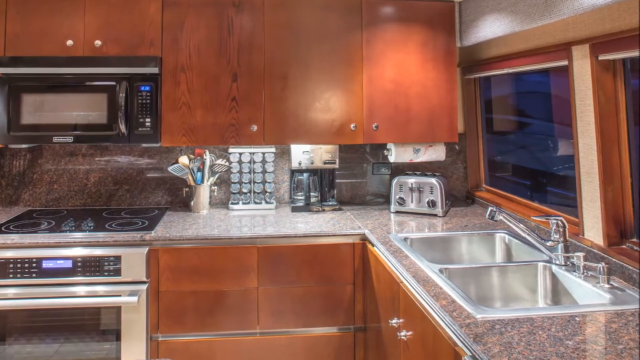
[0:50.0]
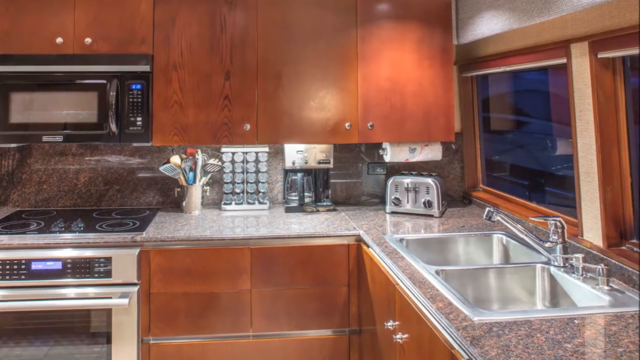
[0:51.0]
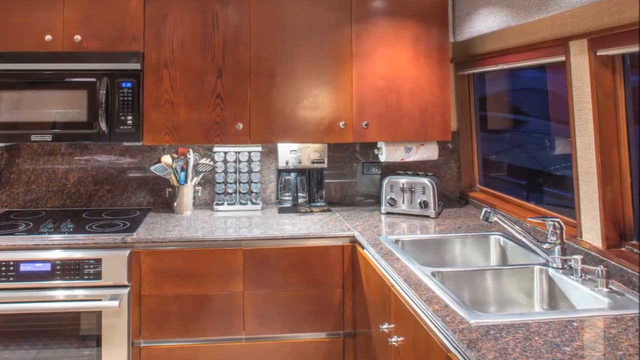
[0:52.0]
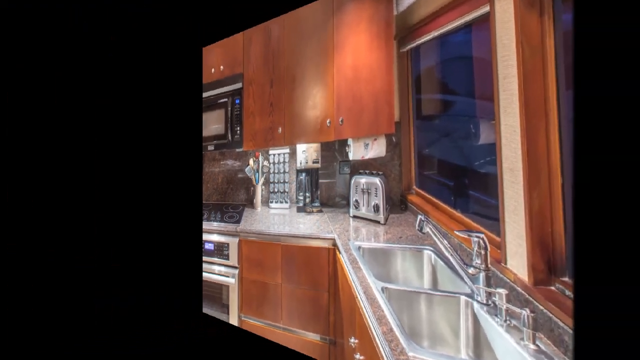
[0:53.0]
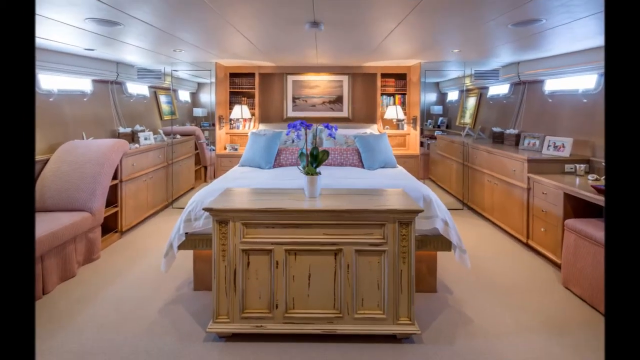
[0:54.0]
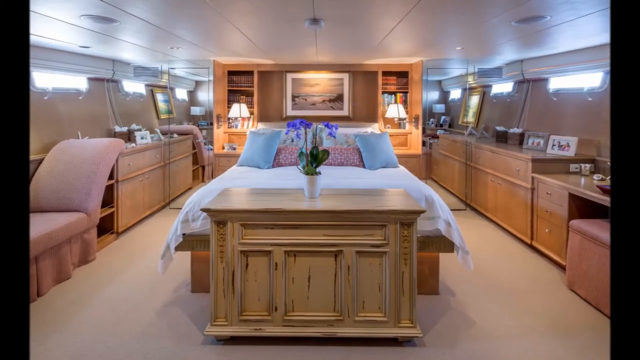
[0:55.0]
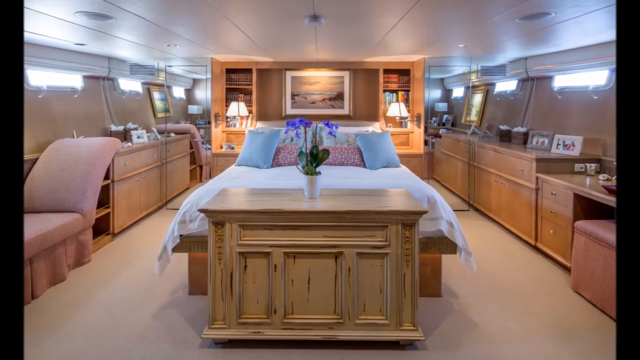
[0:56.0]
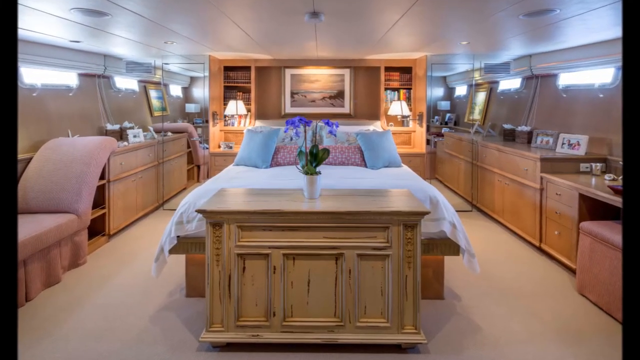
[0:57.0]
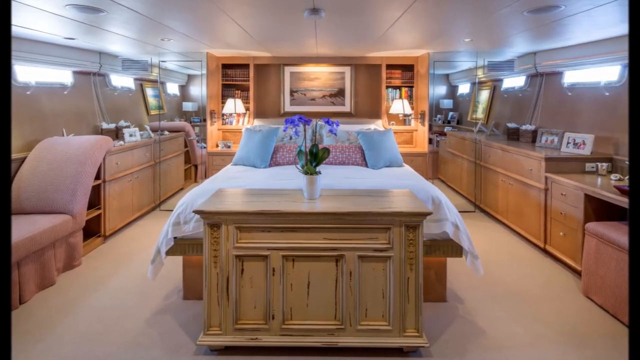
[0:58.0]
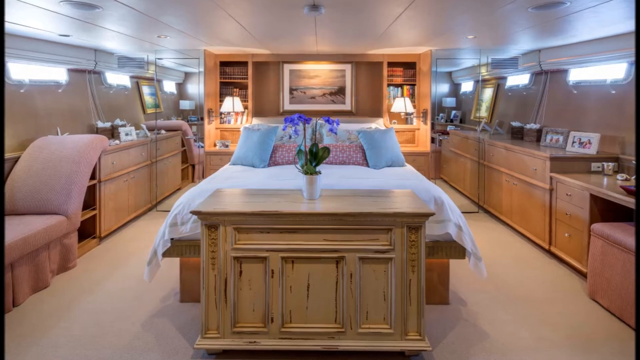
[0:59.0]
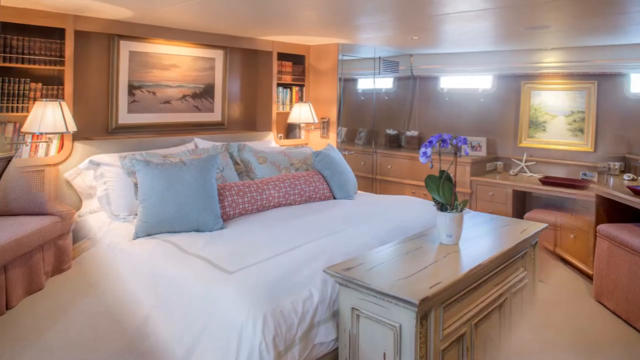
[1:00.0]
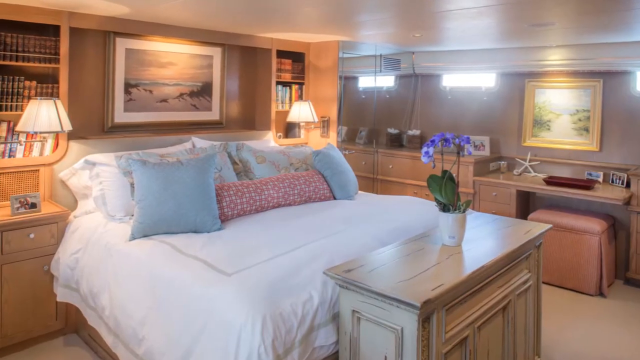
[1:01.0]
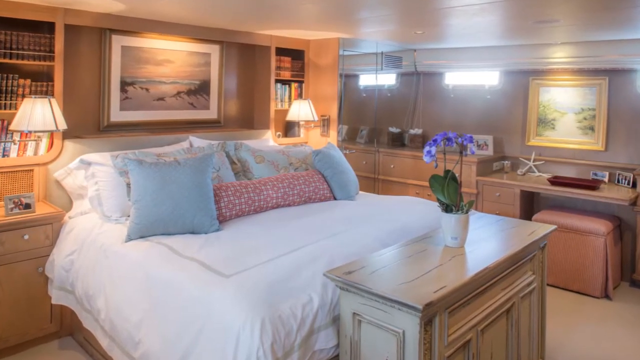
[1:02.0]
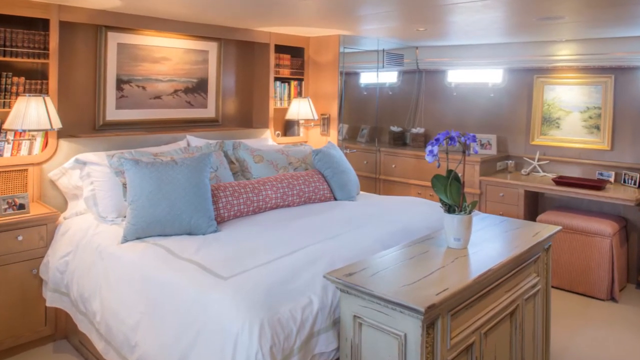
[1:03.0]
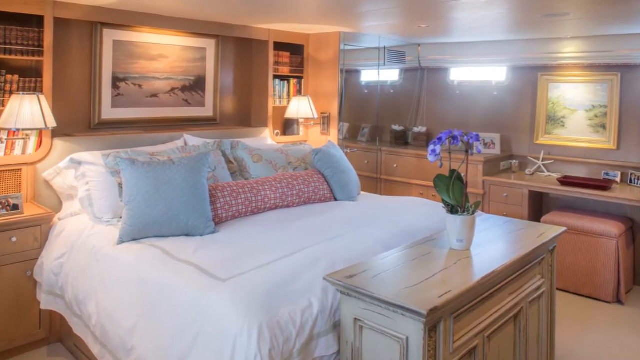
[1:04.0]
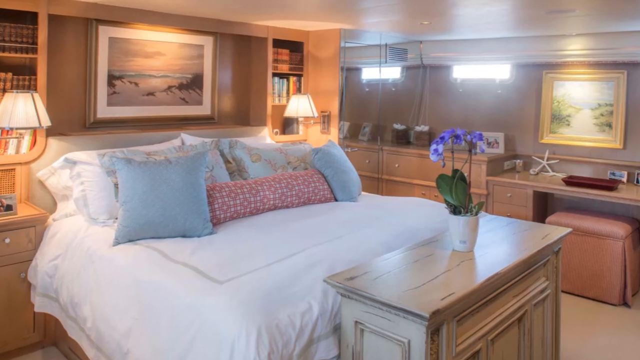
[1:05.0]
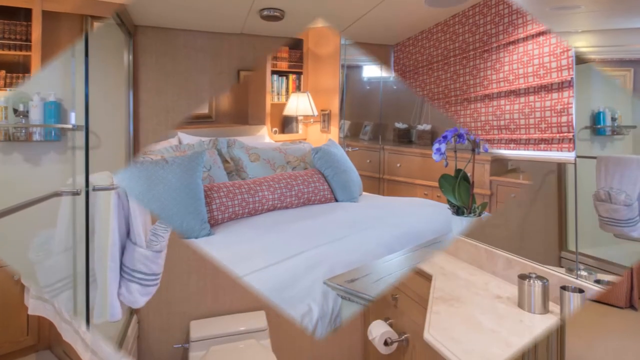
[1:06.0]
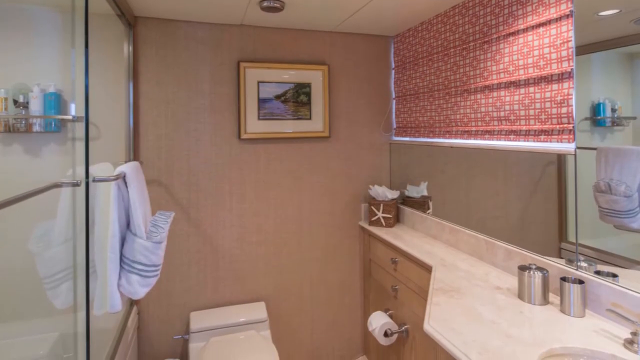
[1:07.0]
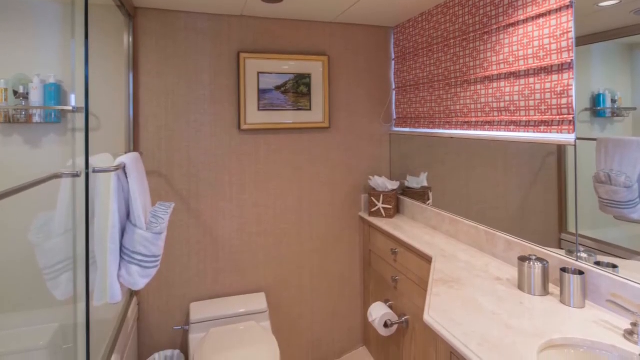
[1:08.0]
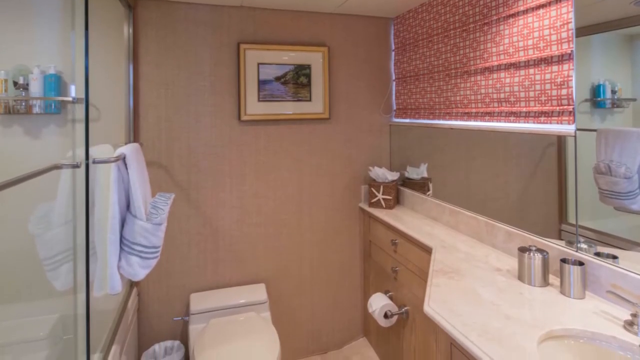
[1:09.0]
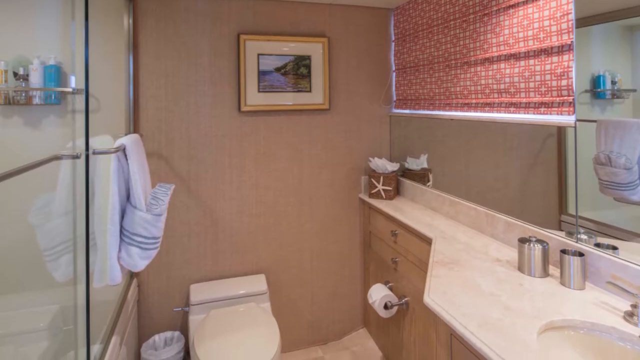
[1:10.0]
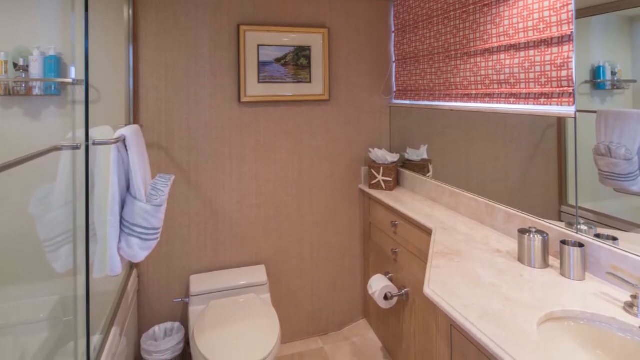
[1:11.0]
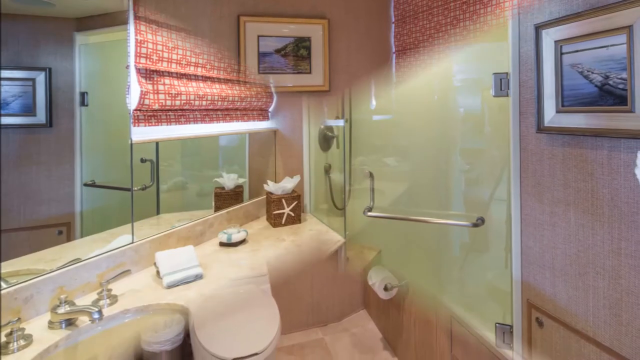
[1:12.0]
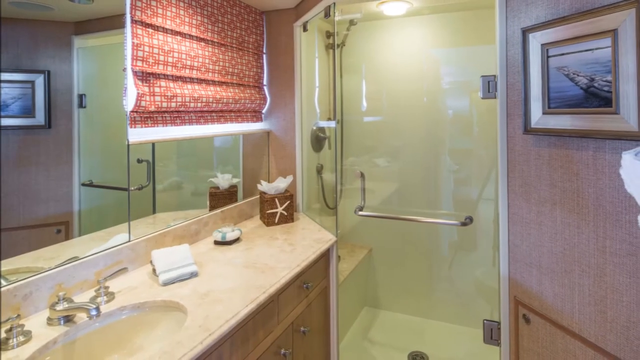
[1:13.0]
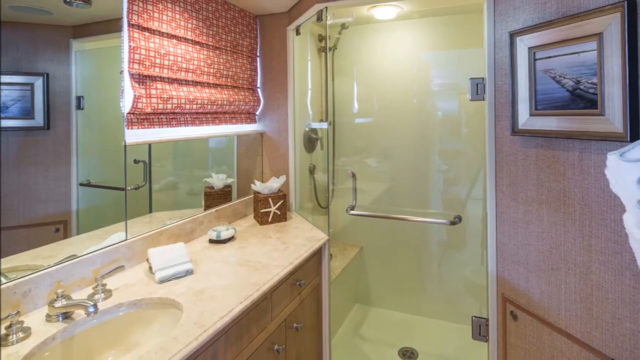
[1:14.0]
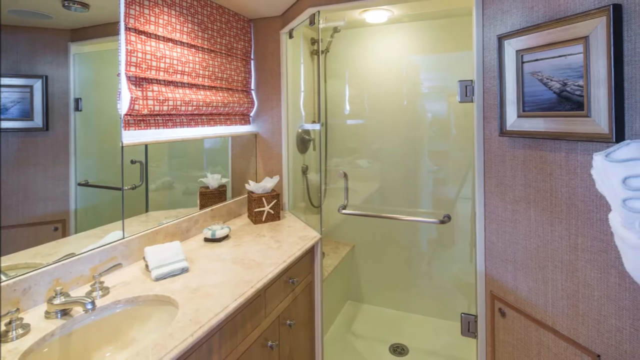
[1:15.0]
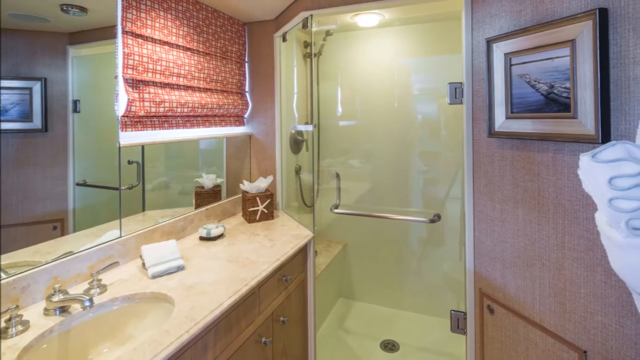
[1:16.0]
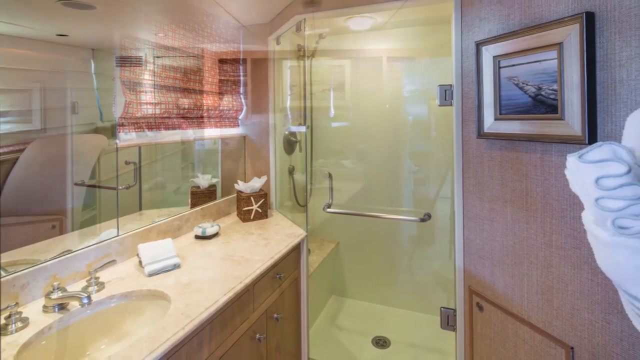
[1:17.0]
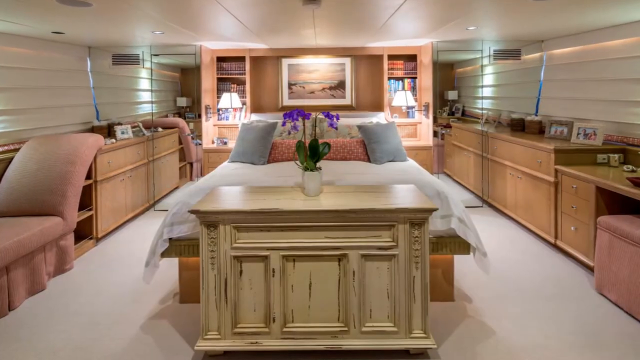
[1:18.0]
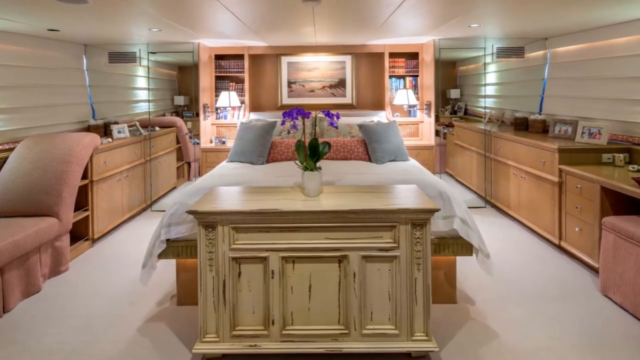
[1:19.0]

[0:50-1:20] A bedroom has a queen-size bed on a platform bed frame. Behind the bed is a built-in shelf with two levels, each with a drawer system. There are two bookshelves, one on each side, and in the middle of the built-in system is a painting of what looks like an ocean. On the left and right sides are more cabinets and a desk. The bedroom also has a daybed and is very roomy for a boat. Another angle of the bedroom is shown, followed by the bathroom, which has a sink with sharp corners, a small toilet and a shower stall with two glass doors, a grab bar and a bench. The video then returns to the bedroom.